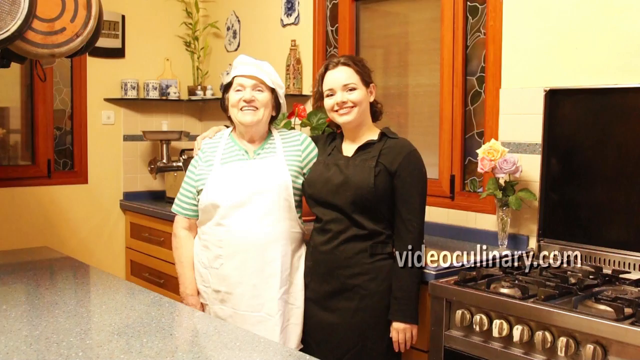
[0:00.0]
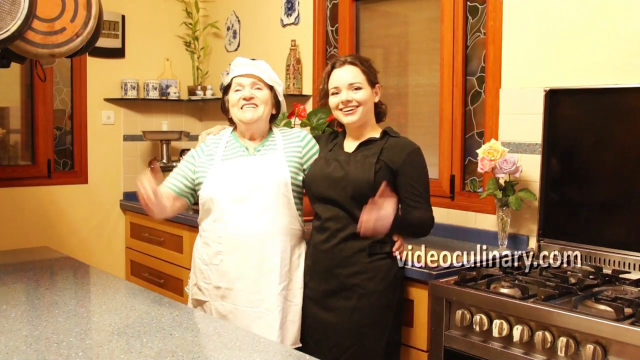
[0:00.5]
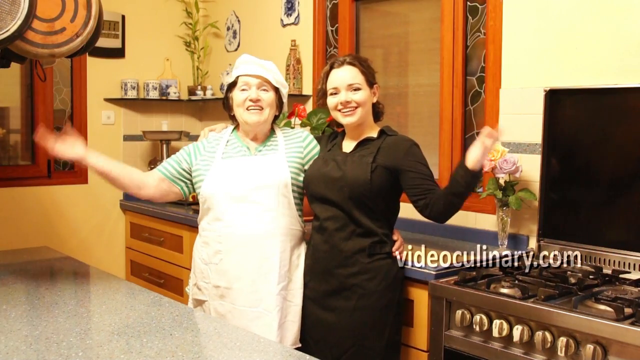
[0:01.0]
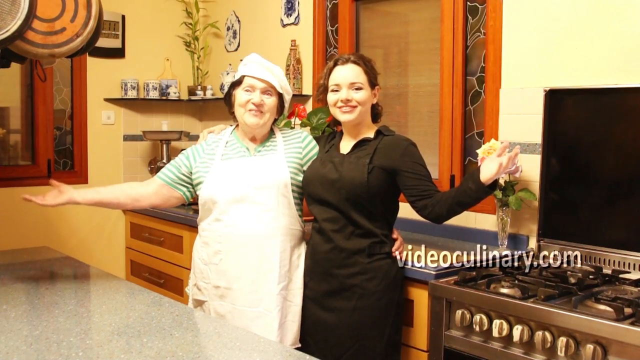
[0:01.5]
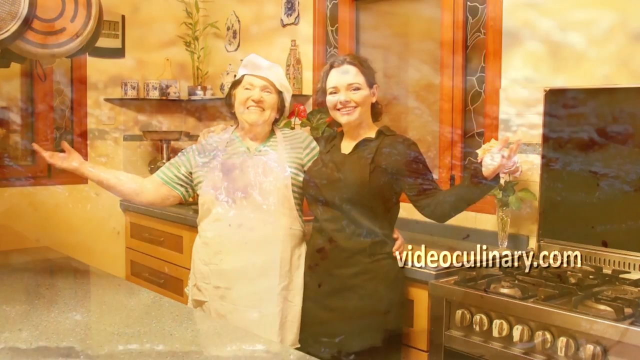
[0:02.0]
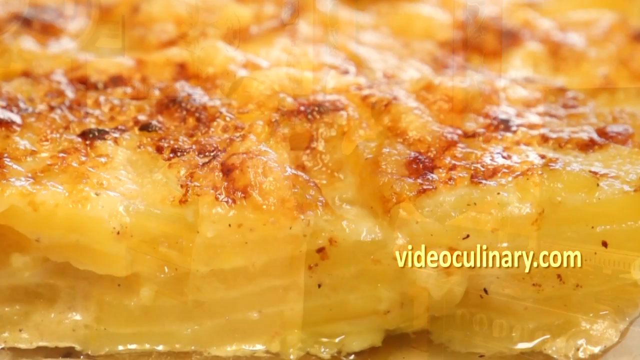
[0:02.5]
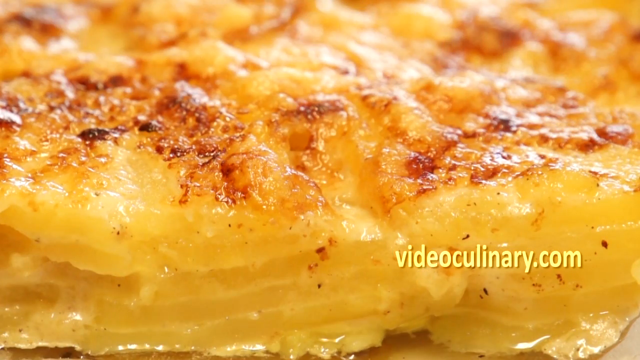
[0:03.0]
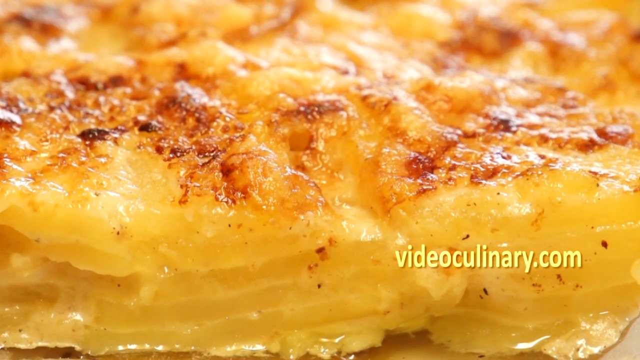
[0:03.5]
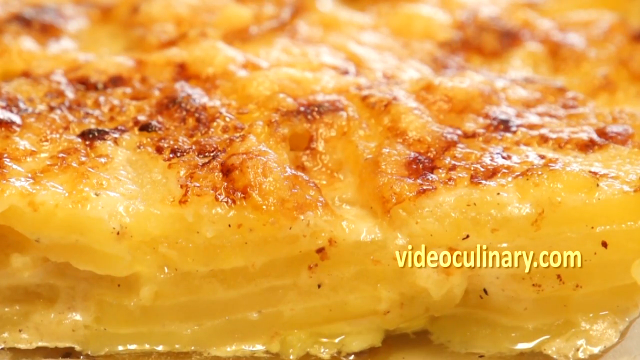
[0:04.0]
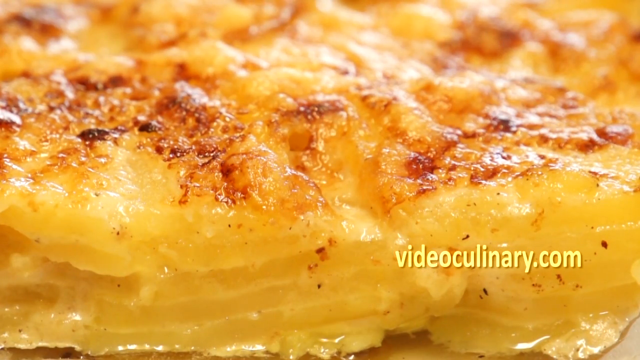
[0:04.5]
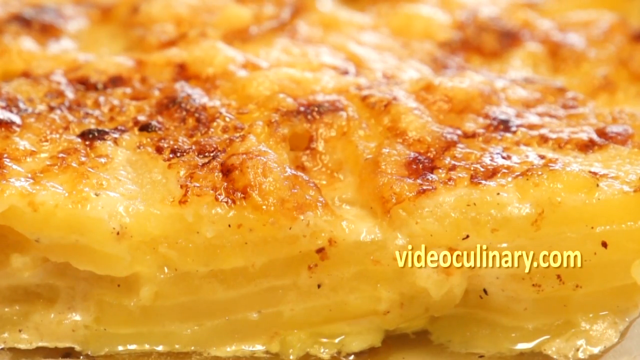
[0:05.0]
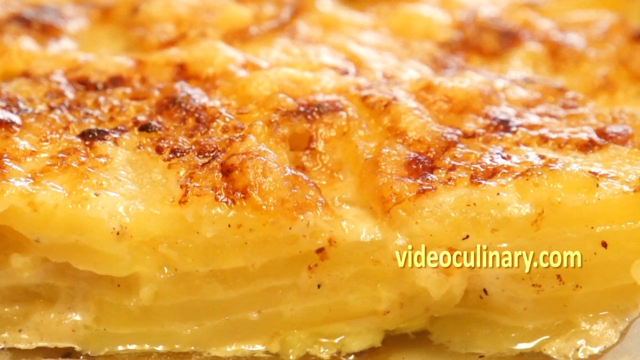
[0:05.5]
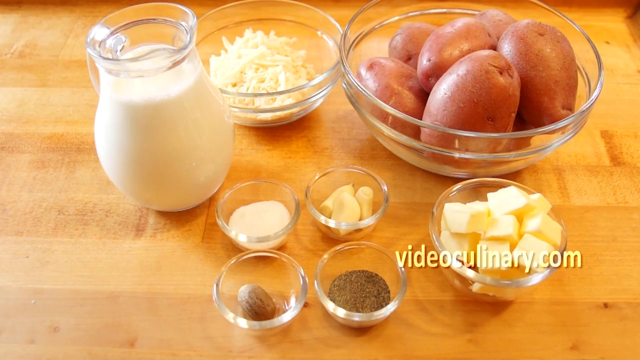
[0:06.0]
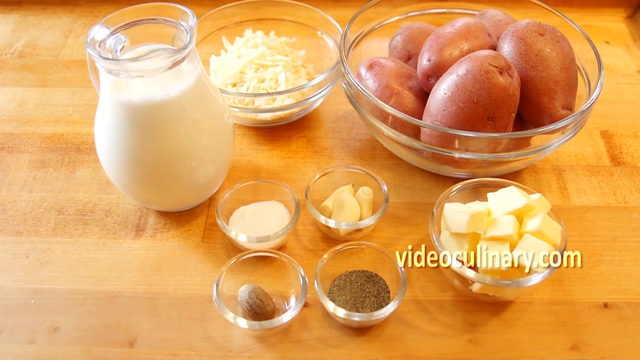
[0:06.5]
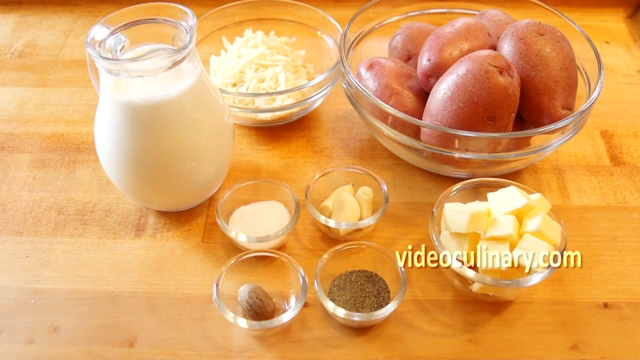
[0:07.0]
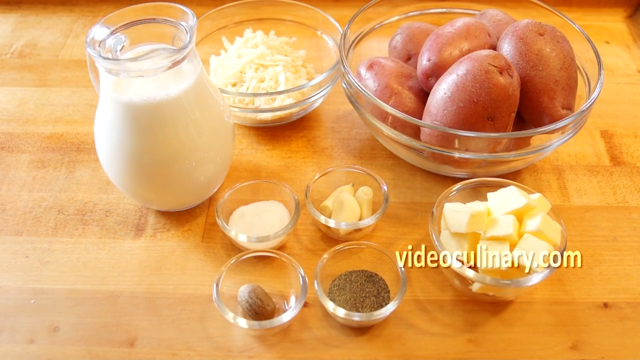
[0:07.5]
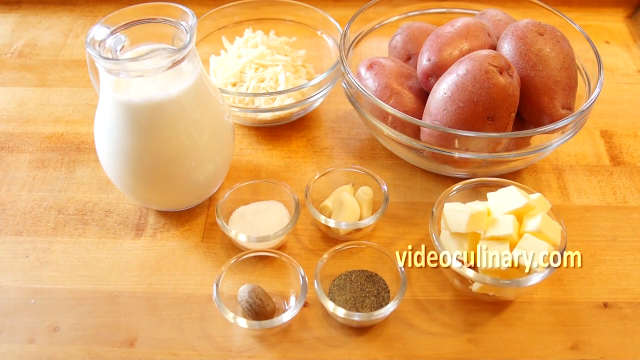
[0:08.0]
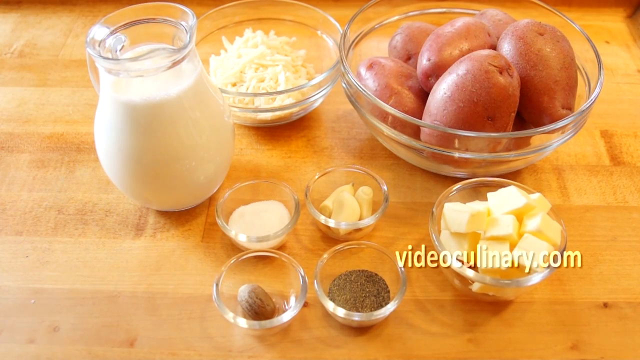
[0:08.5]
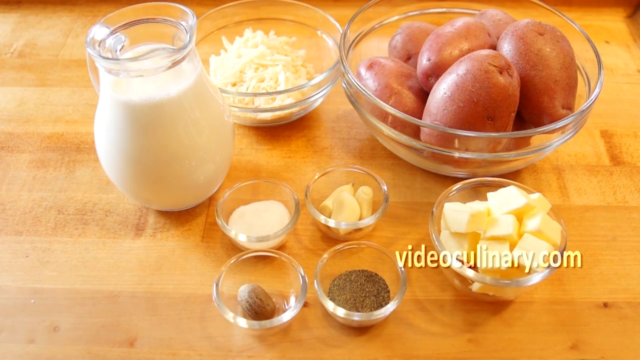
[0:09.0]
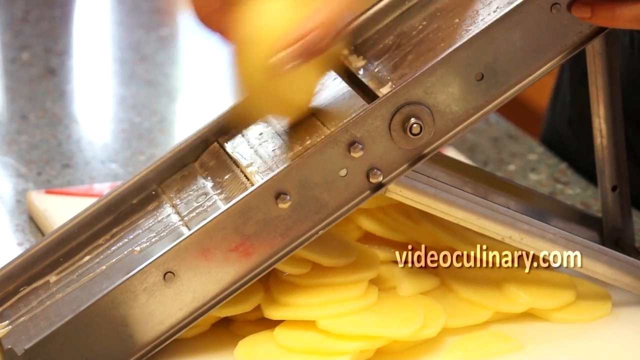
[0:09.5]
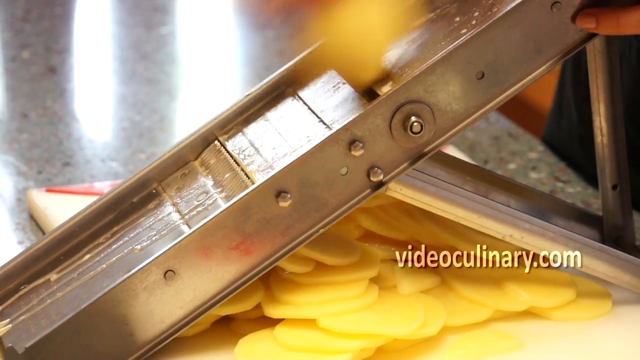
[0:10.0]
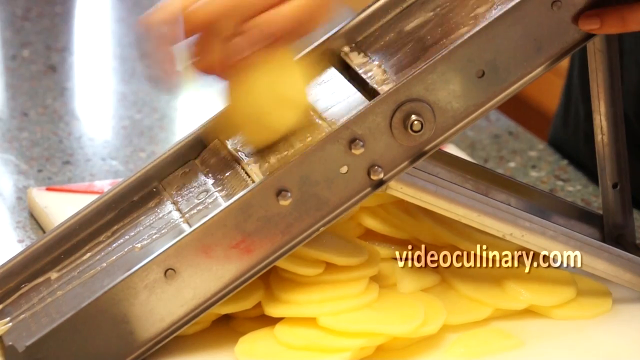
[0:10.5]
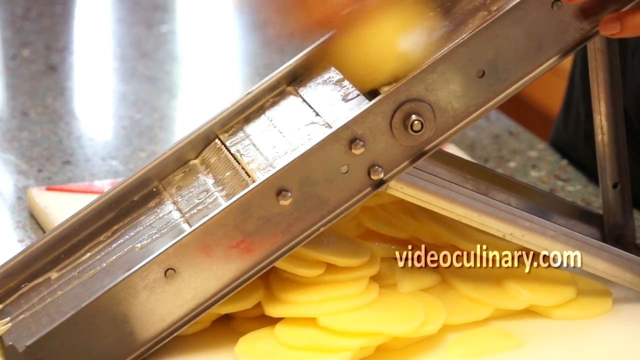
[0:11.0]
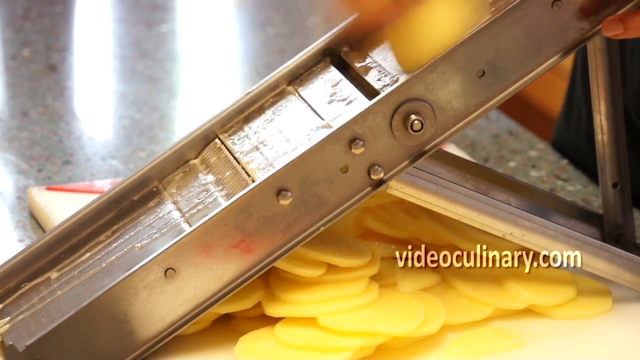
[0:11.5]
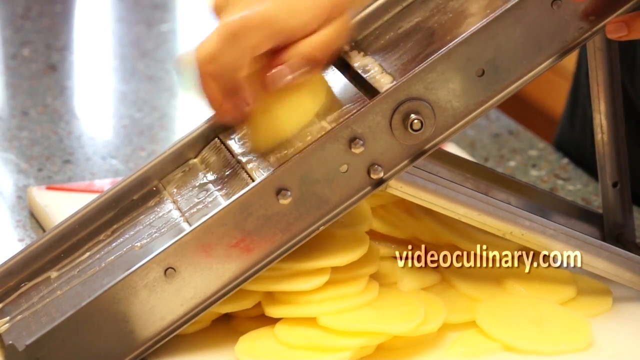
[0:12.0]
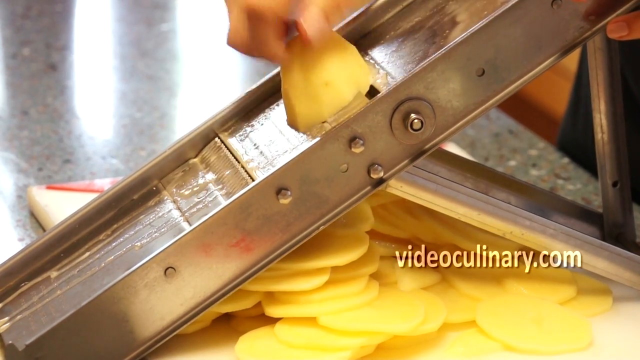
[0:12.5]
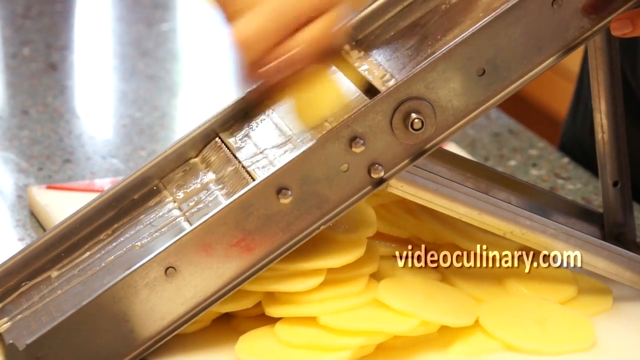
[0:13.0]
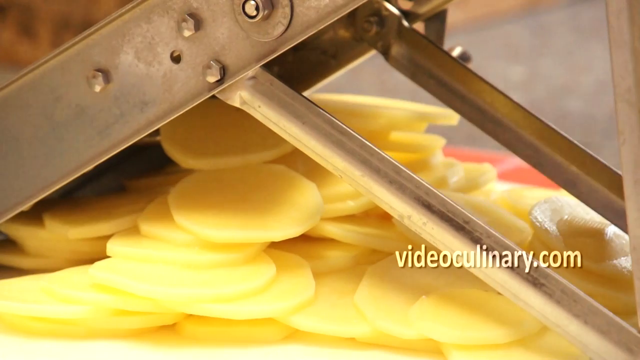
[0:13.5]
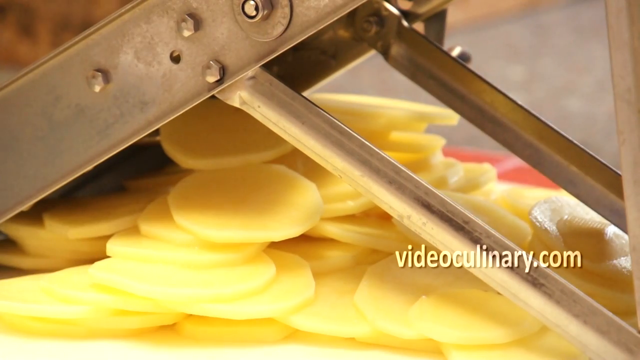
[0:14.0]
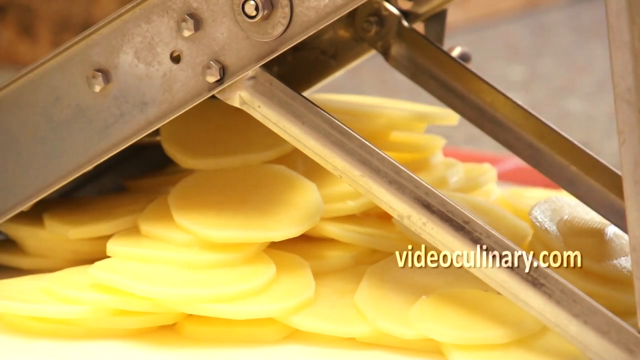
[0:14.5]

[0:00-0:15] Two women stand with their hands on each other's backs, gesturing toward the viewer. On the left is an older woman in a white apron, and on the right is a younger woman in a black apron; both are smiling, and they are in a kitchen. The shot cuts to a dish that looks like potato gratin, its surface very cooked, yellow at the bottom and brown toward the top, with the text "videoculinary.com" on screen. Next, the shot cuts to the ingredients for the dish in glass bowls and jars on a wooden cutting board: a big bowl of potatoes, a bowl of butter, different seasonings, what looks like cheese in a bowl, and a glass jar that appears to be full of some sort of milk. The shot then cuts to a metal grater, where a potato is being peeled against the grater and the pieces come out at the bottom.